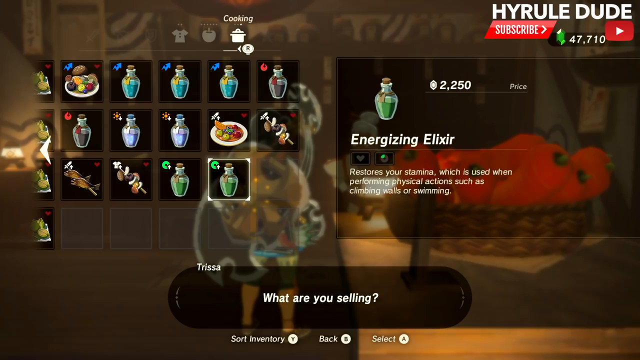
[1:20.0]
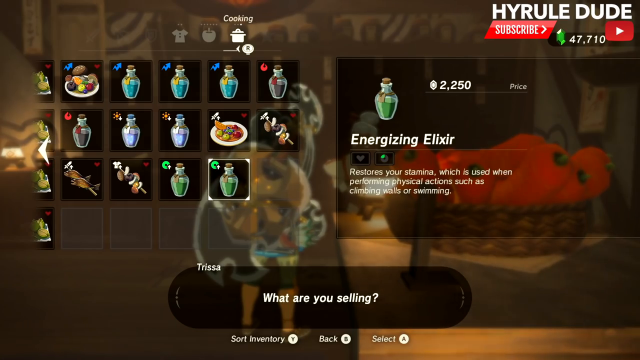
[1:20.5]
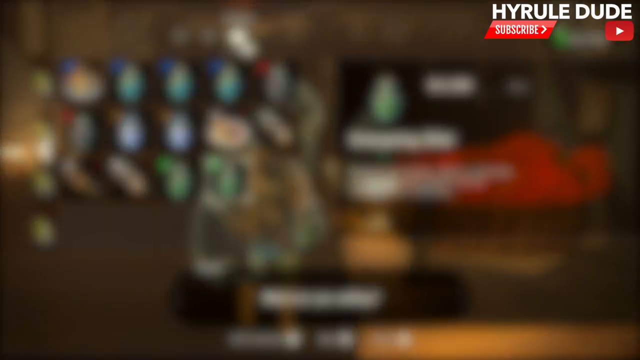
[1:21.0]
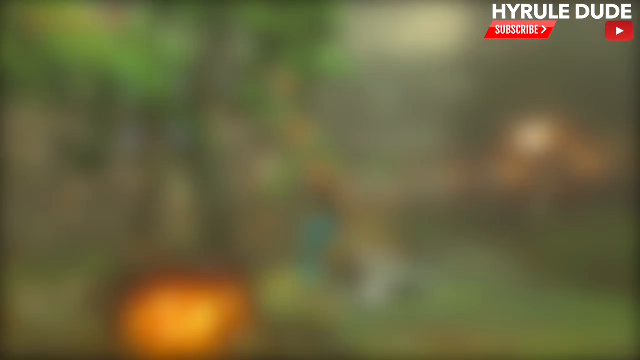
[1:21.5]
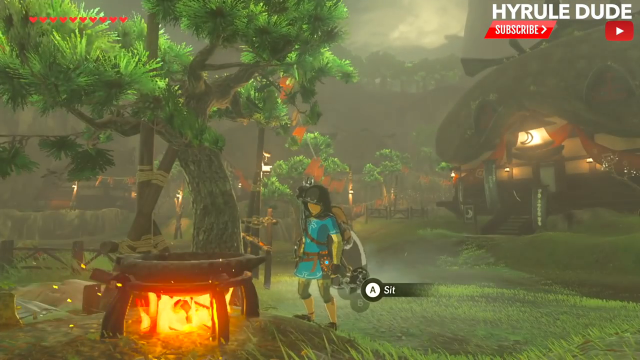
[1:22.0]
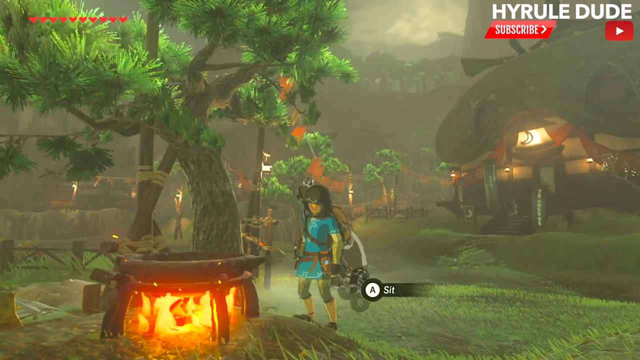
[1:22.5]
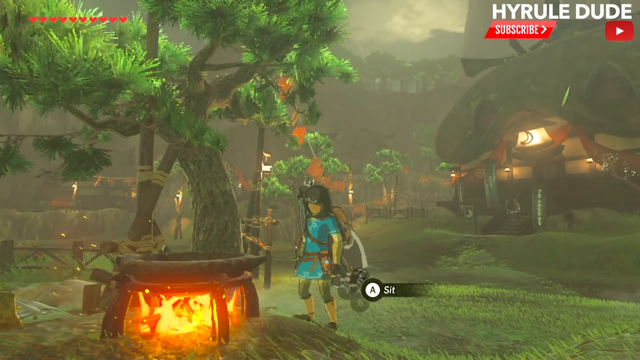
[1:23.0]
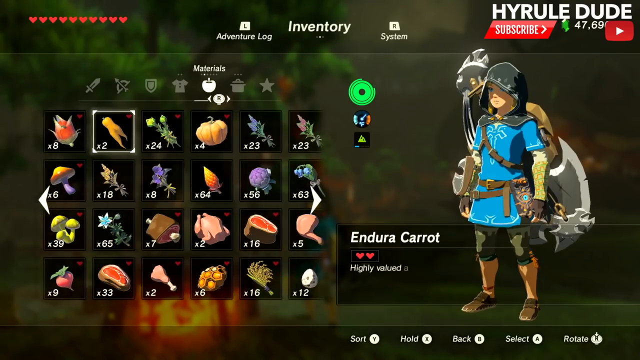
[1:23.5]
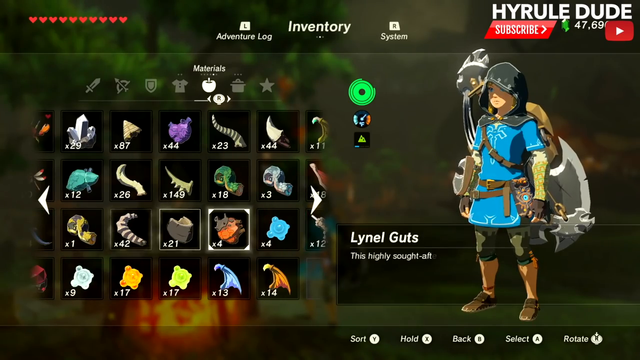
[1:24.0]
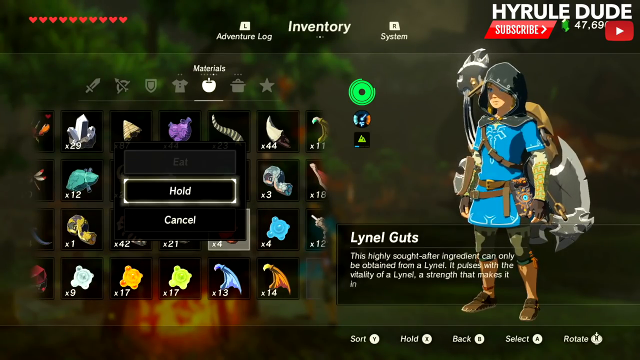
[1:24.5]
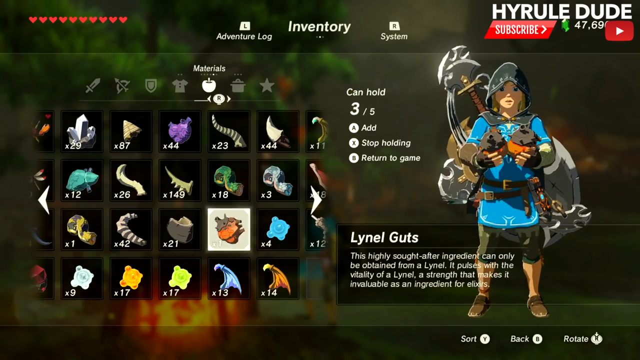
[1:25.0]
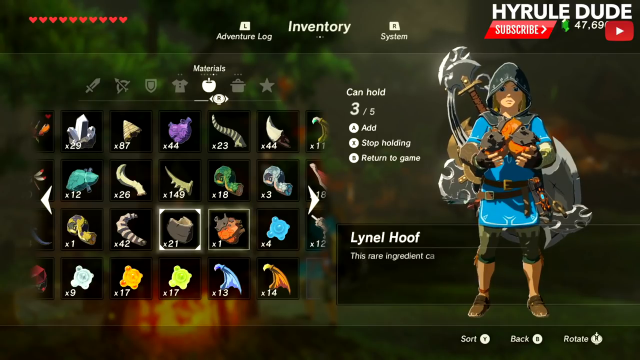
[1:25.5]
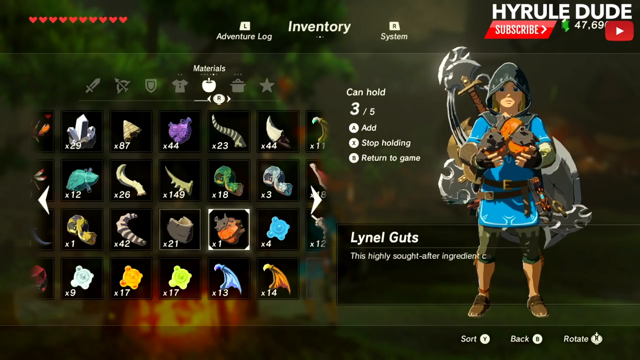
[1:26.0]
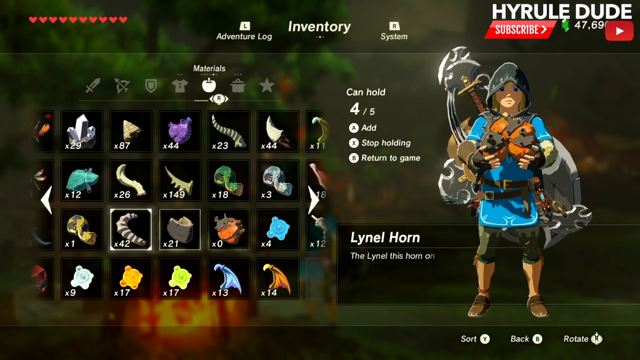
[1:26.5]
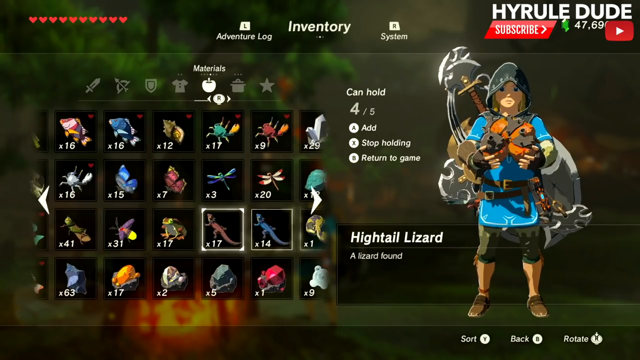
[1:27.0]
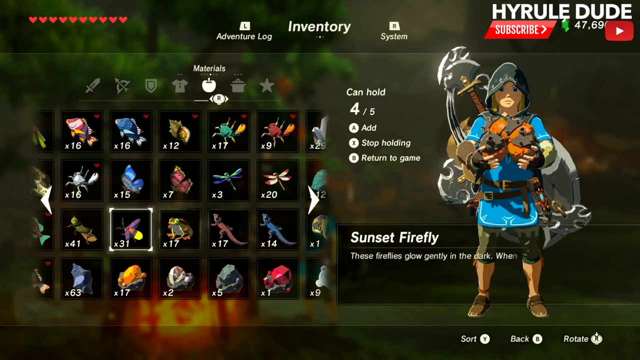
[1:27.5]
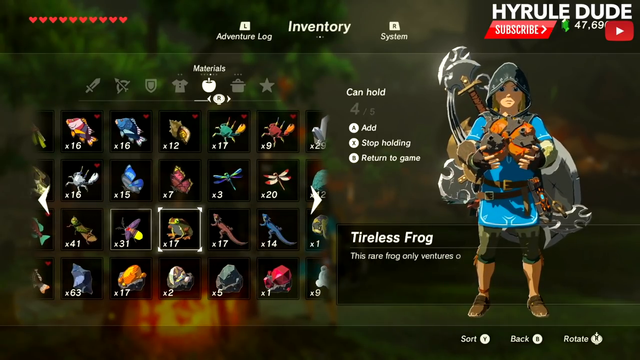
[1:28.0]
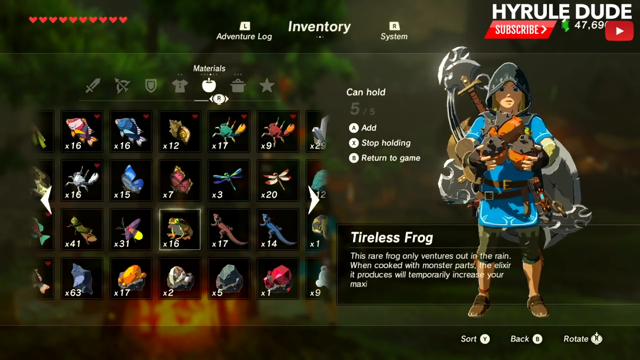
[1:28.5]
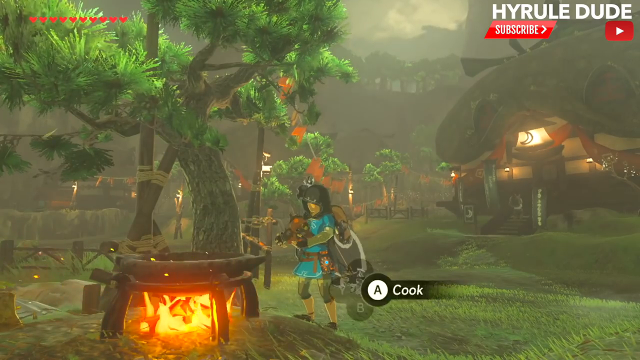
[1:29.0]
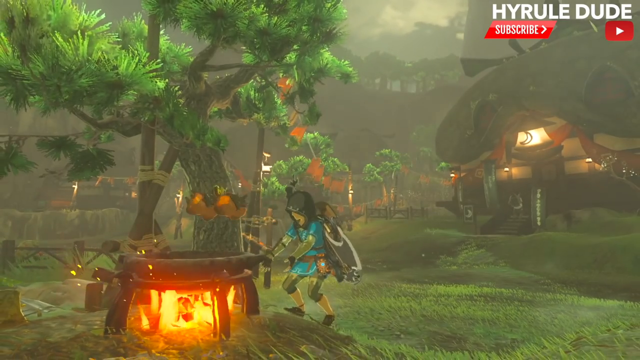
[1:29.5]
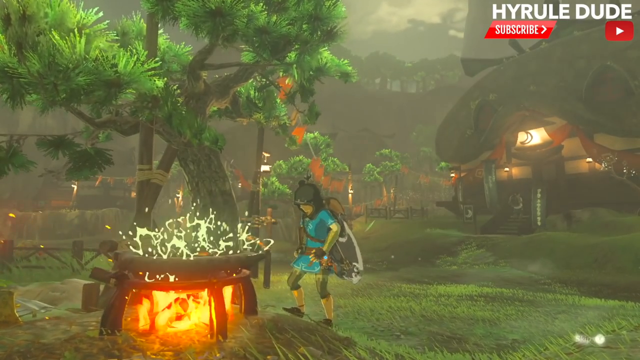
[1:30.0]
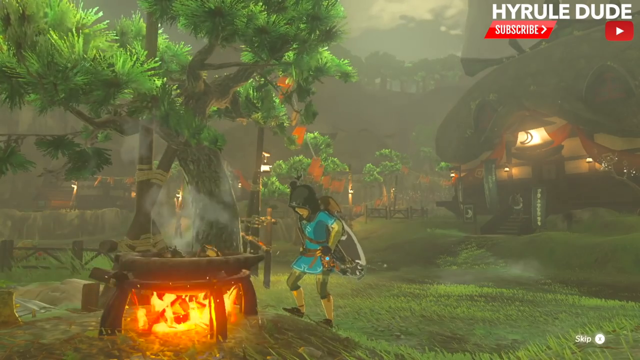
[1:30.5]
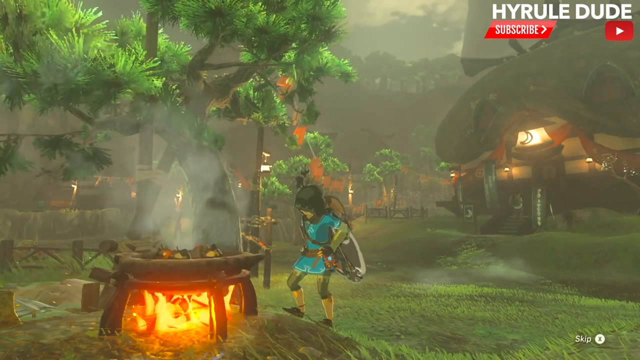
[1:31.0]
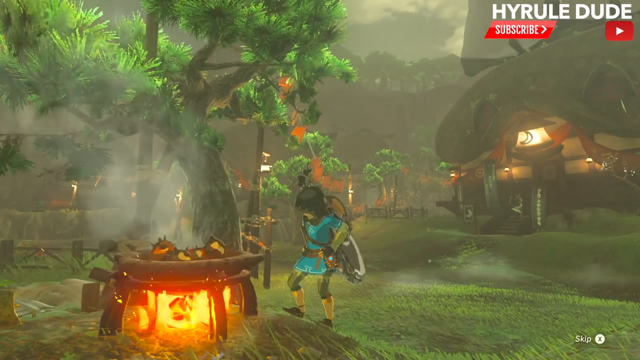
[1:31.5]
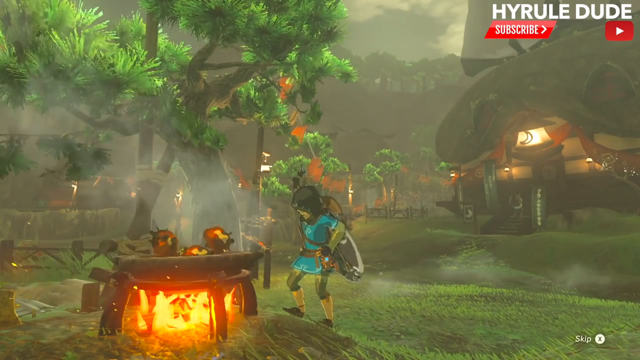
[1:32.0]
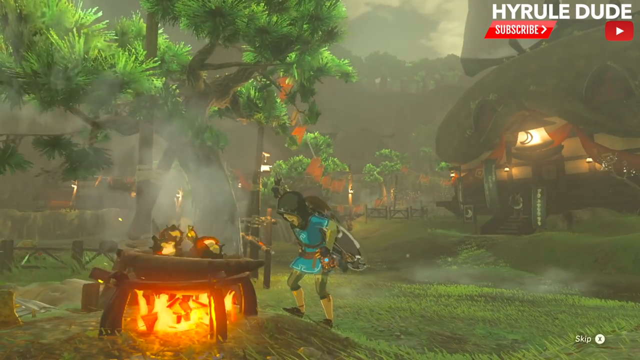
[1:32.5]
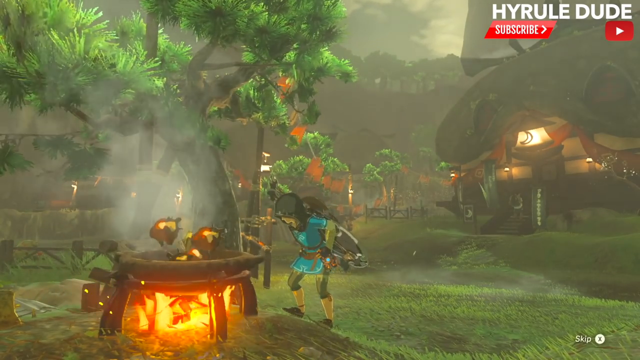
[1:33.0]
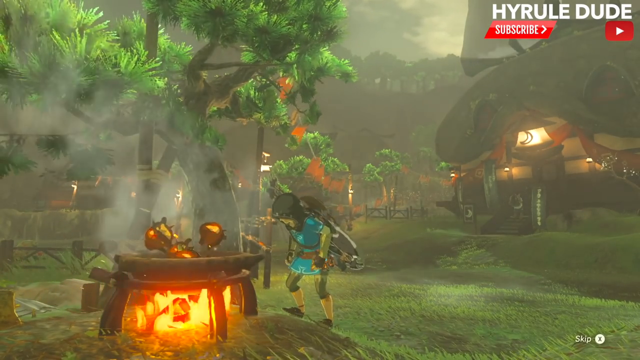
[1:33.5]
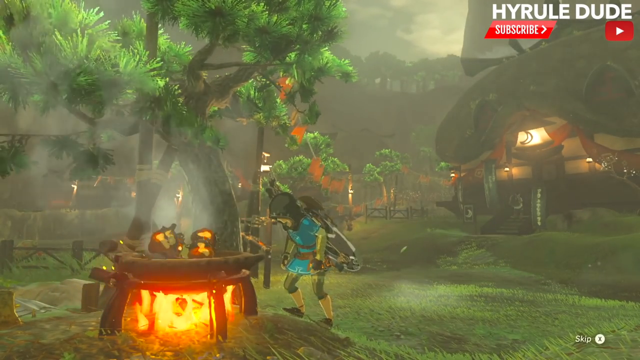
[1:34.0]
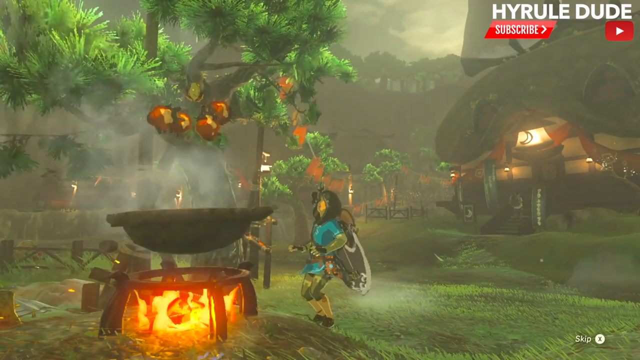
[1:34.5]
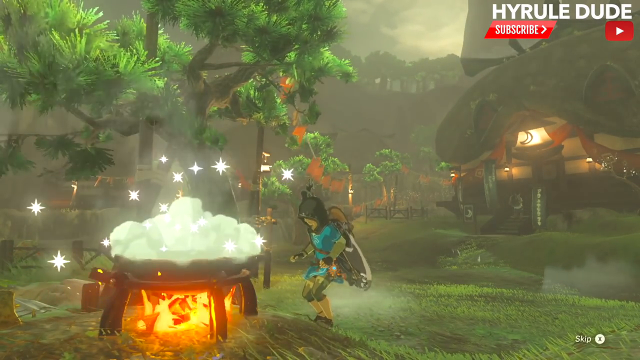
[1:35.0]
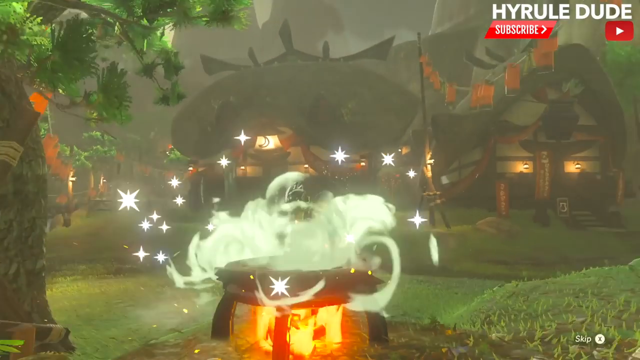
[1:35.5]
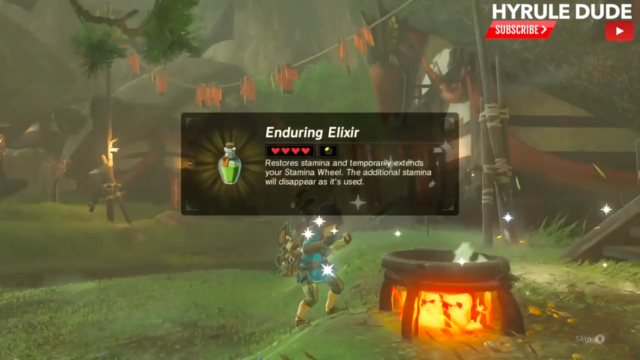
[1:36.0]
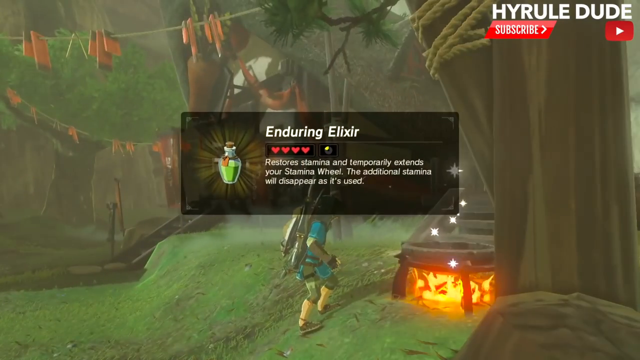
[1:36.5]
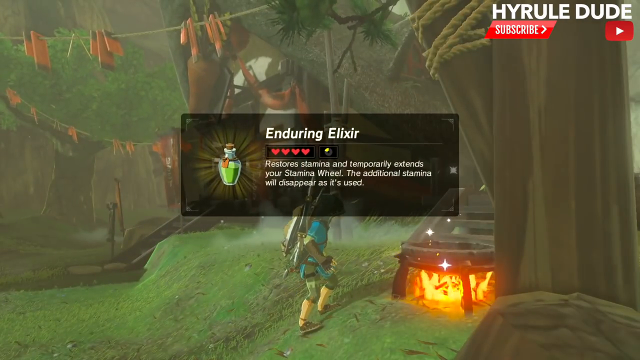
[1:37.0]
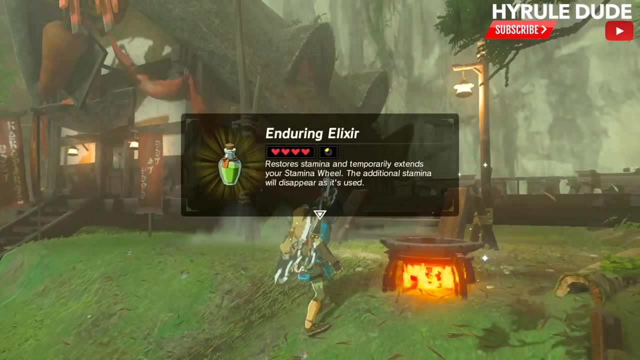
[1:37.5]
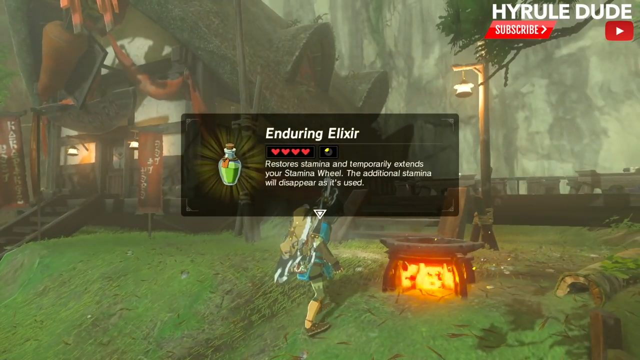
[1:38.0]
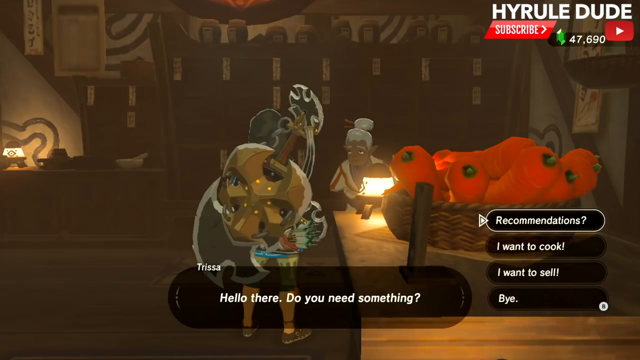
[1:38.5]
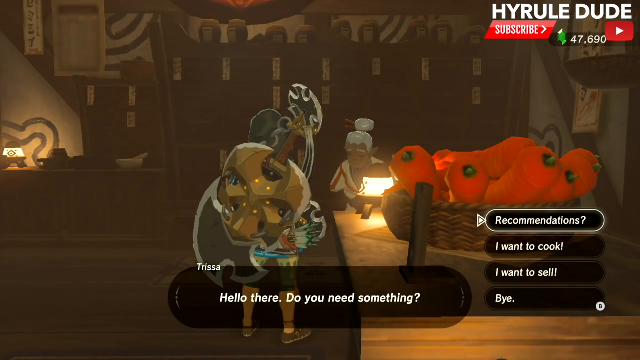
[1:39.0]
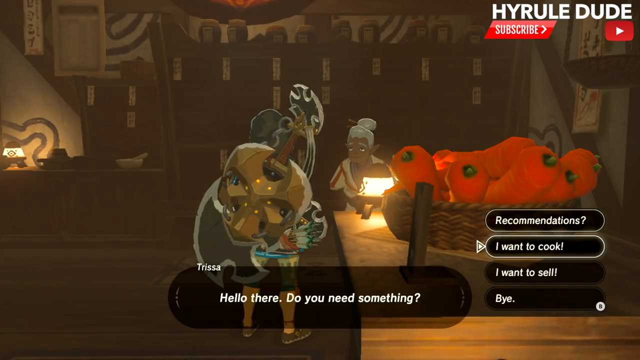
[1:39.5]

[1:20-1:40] The game screen has a dull brown background. On the left side is a matrix full of images of bottles and dishes, and on the right is a glass bottle with green liquid in it, labeled below "Energizing Elixir." In the upper right corner are the words "Hyrule Dude," and across the bottom of the screen is written "What are you selling?" Next, a young person in a tunic, with weapons that look like axes and metal blades strapped behind him, stands beside a large fire outdoors with a large pan placed over it. Behind the fire and the pan is a tree with a curved trunk and thick green leaves, with more dense vegetation all around in the background. He stands watching the fire. He then appears on the right side of the screen, with a matrix of various images of different objects on the left, and one of the objects is highlighted. The screen transitions to the young character tossing the objects he just got from the matrix onto the pan to cook. The objects jump up and down on the pan and give off a haze and a twinkle of light as they cook.